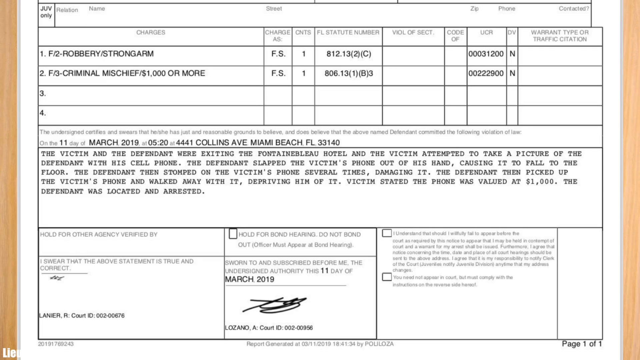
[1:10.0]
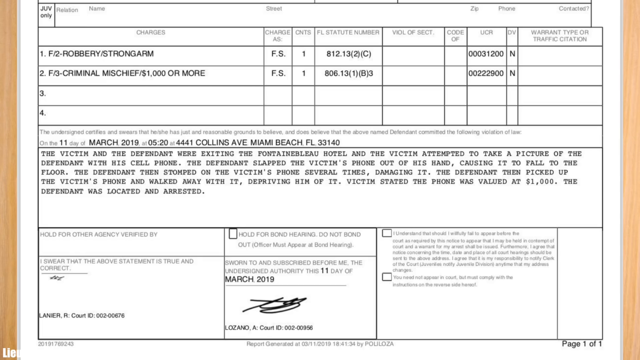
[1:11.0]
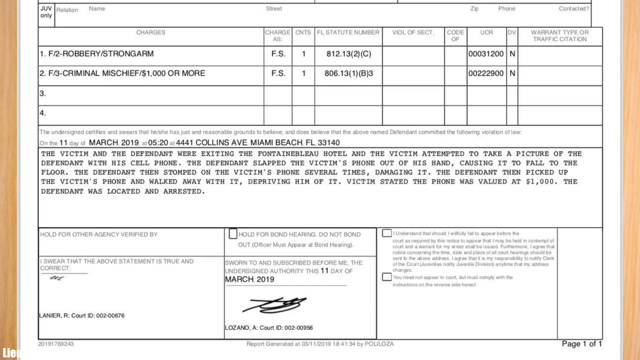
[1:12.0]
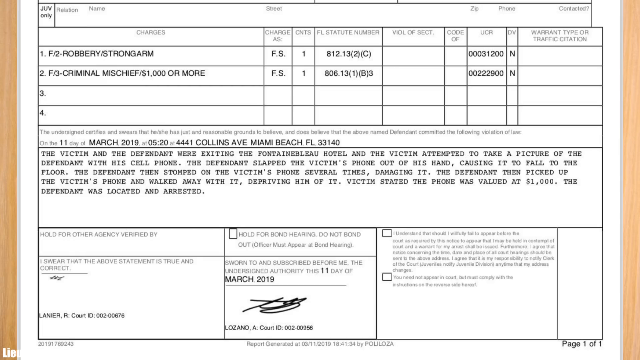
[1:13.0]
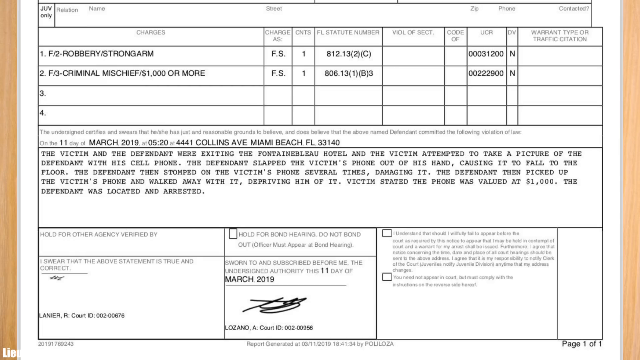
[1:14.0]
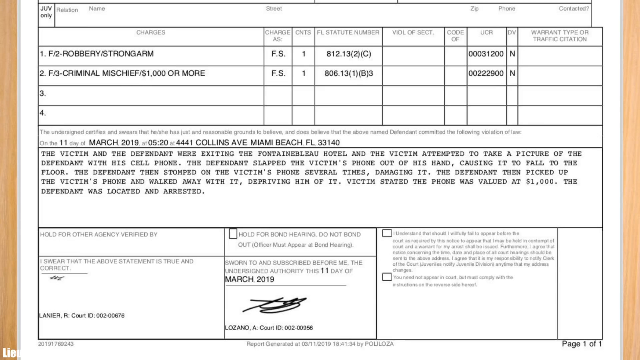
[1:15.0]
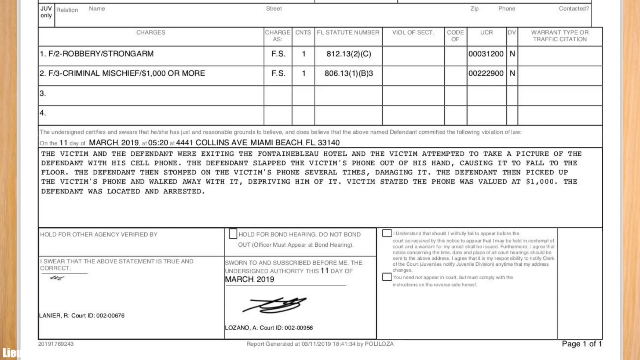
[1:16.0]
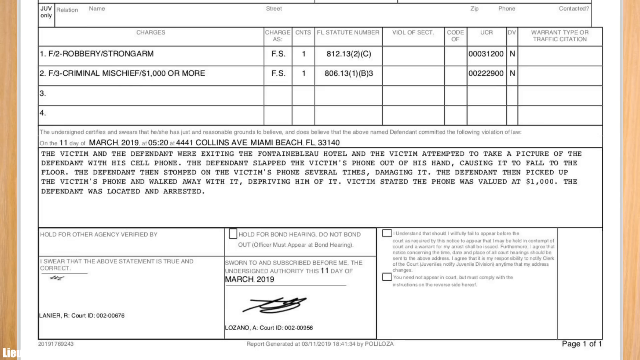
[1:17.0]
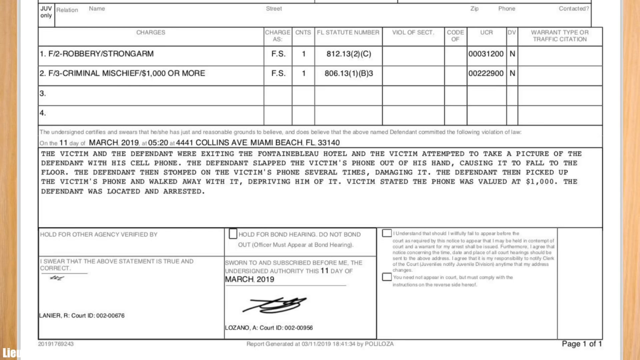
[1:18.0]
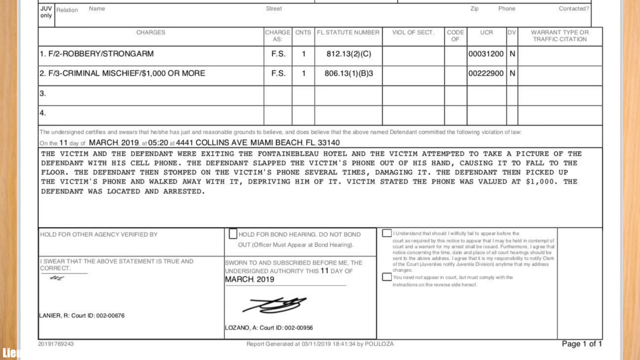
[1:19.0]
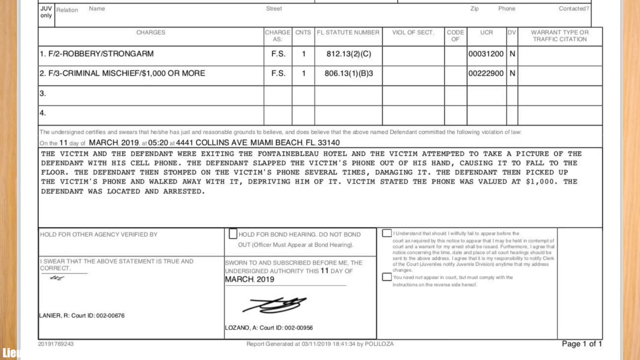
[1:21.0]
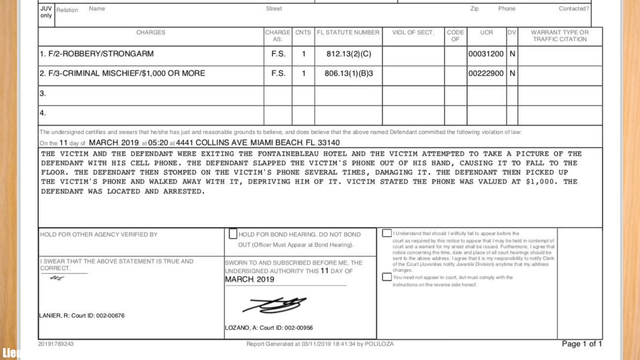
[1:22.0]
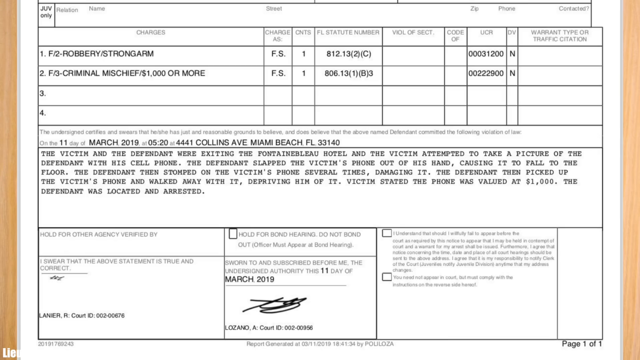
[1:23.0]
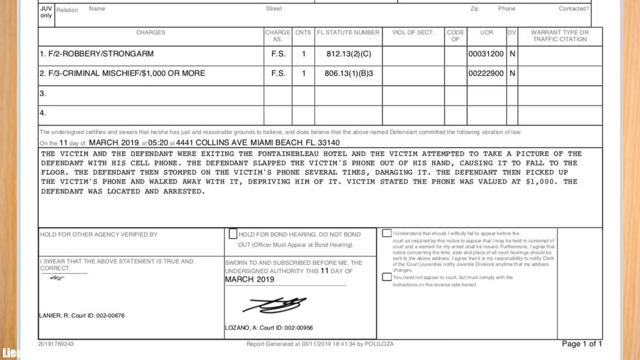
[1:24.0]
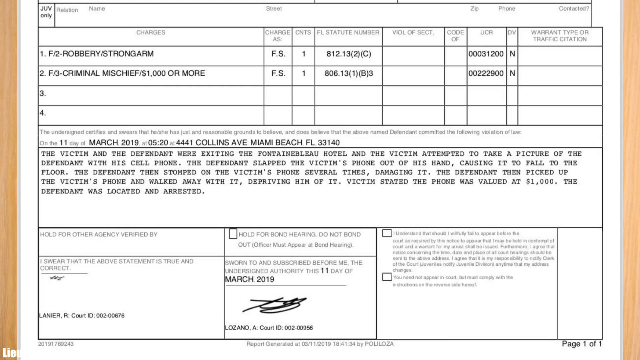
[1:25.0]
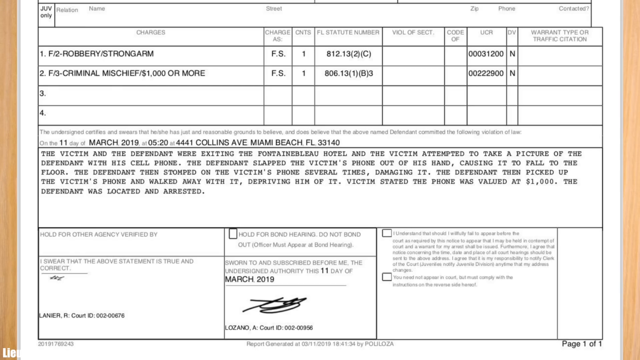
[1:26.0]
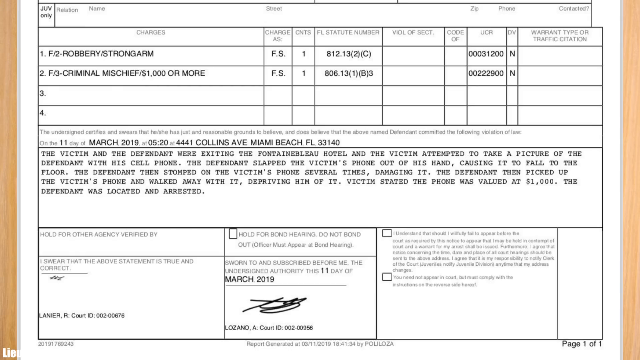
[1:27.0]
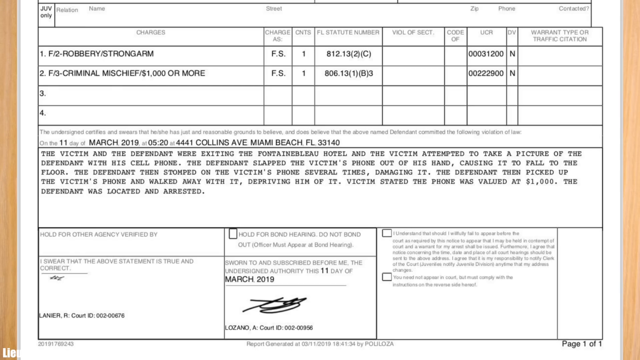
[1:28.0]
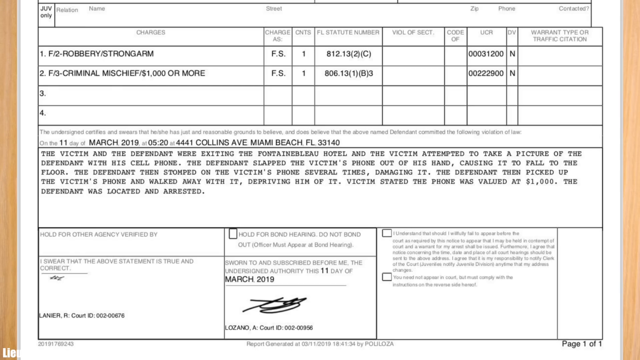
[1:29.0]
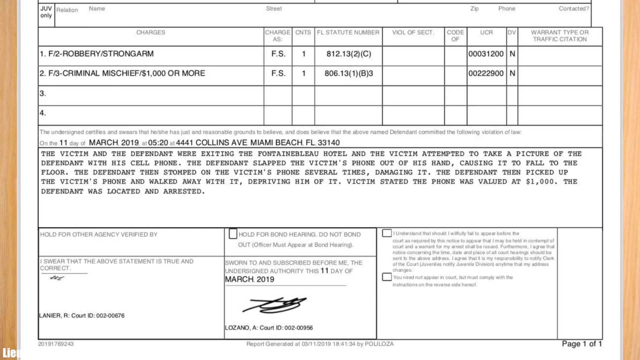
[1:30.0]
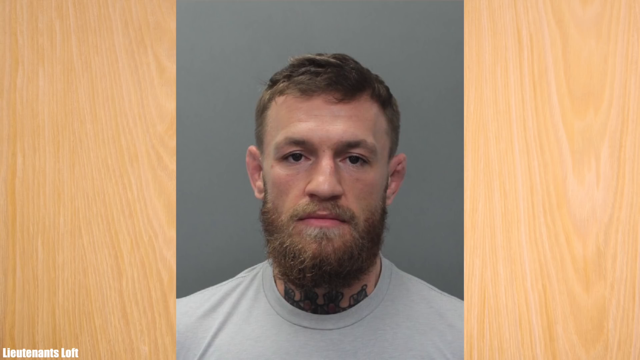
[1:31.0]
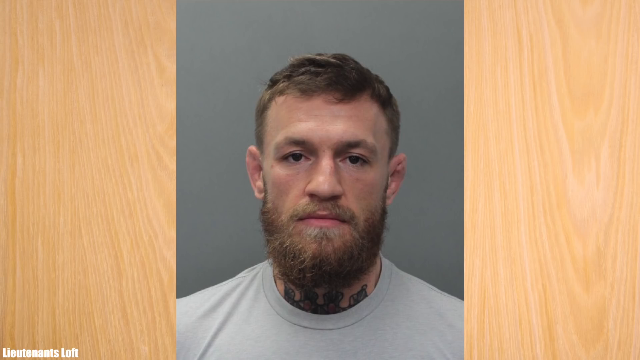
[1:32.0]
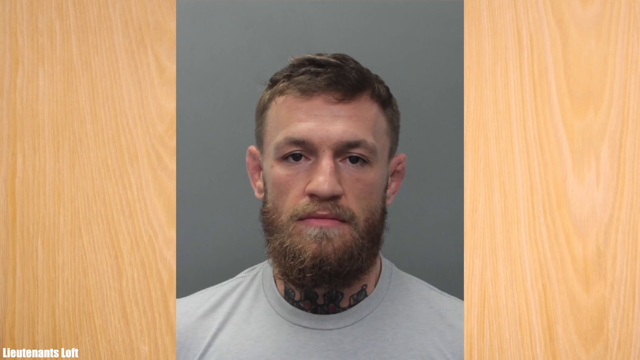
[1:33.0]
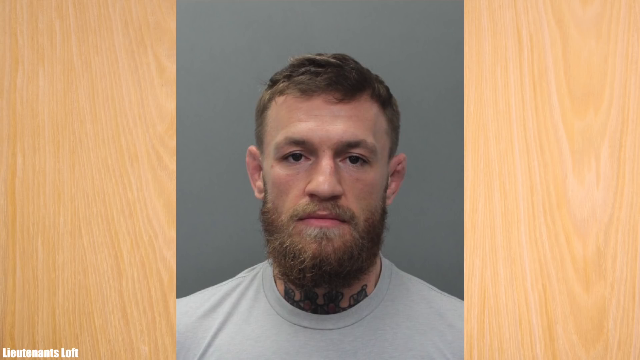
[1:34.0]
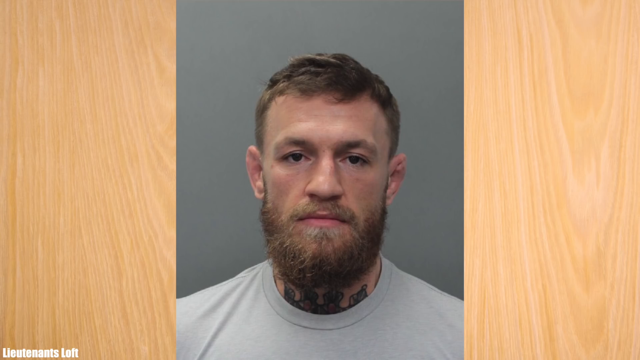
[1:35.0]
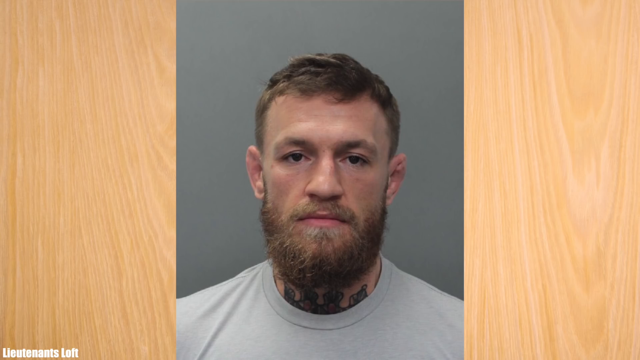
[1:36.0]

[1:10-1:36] A statement is displayed with signatures and timestamps. The arrested man, who is white with short golden hair and tattoos on his neck, is shown. The statement refers to the victim's thousand-dollar cell phone being stomped on and taken.